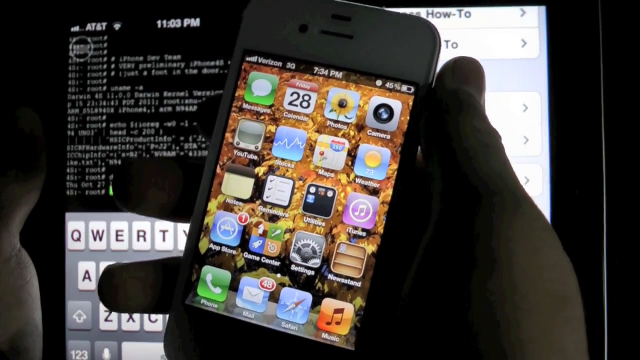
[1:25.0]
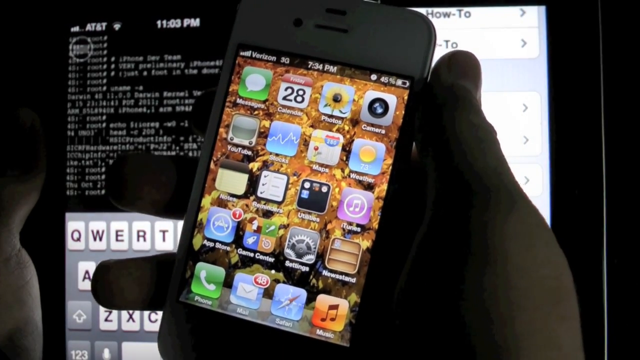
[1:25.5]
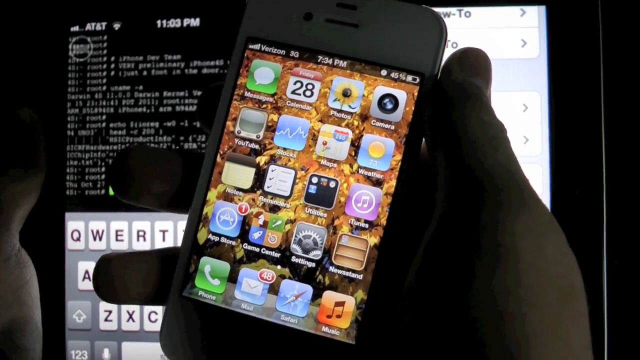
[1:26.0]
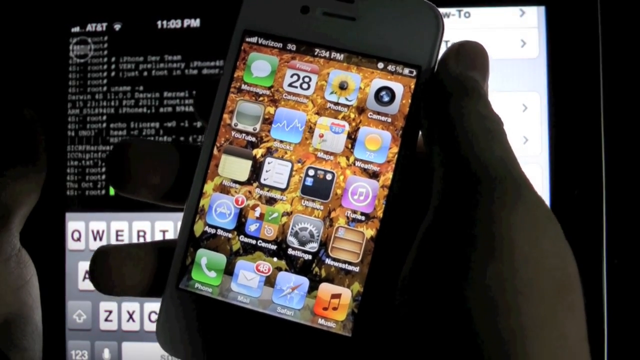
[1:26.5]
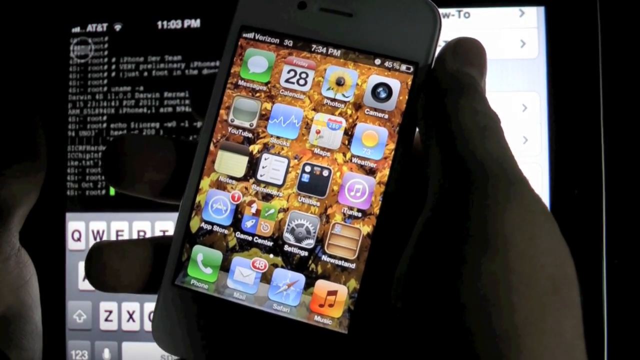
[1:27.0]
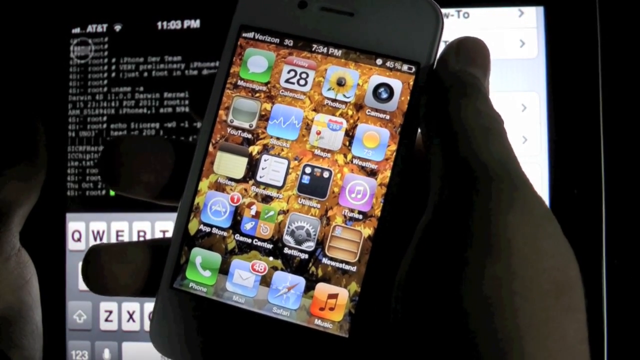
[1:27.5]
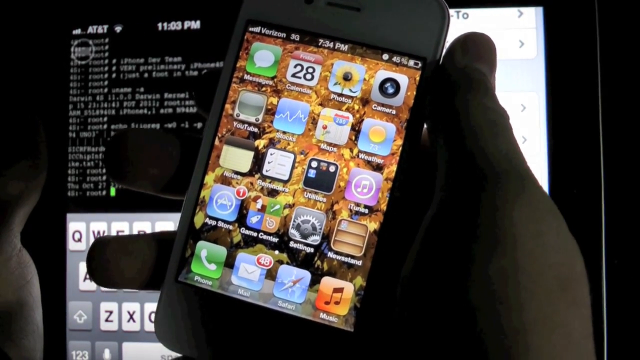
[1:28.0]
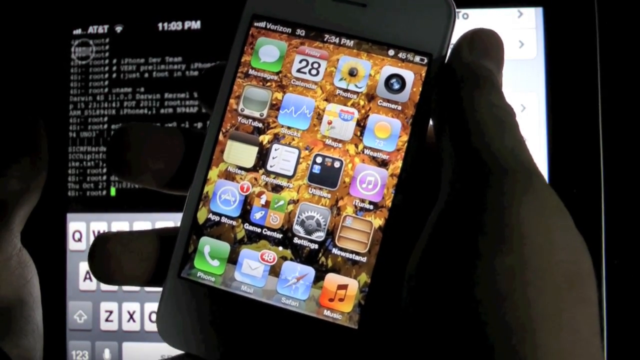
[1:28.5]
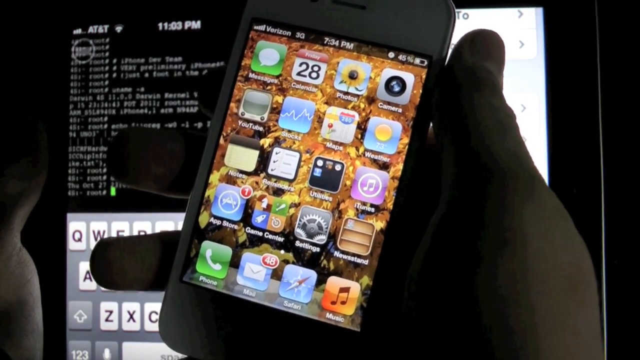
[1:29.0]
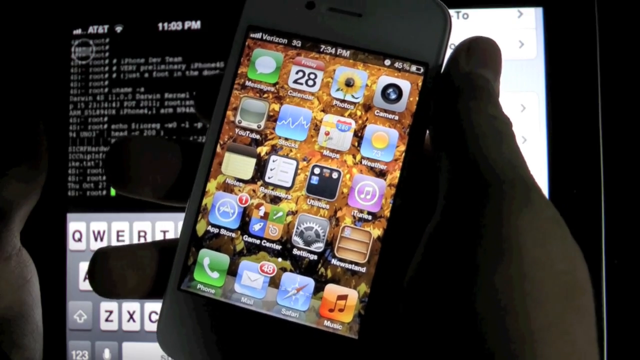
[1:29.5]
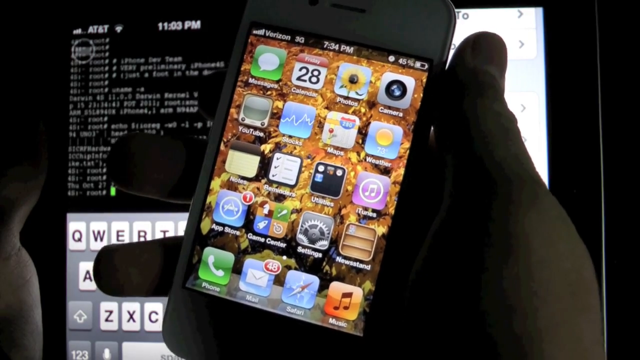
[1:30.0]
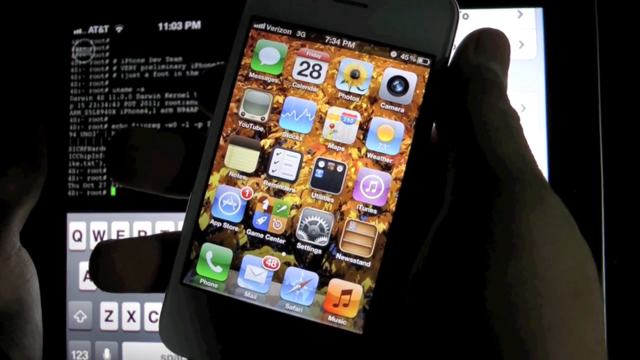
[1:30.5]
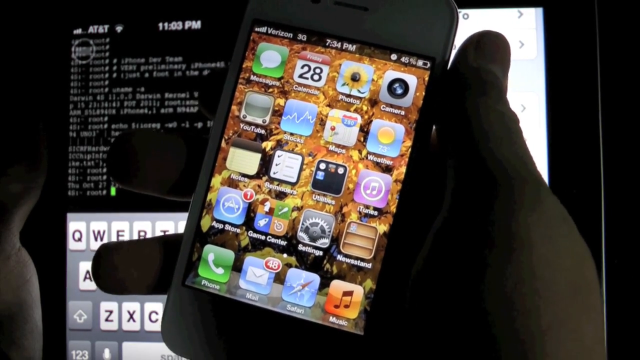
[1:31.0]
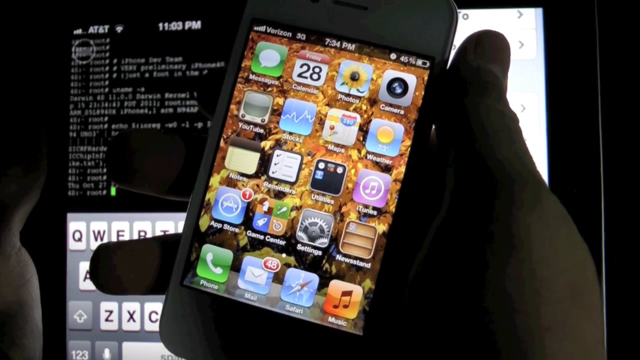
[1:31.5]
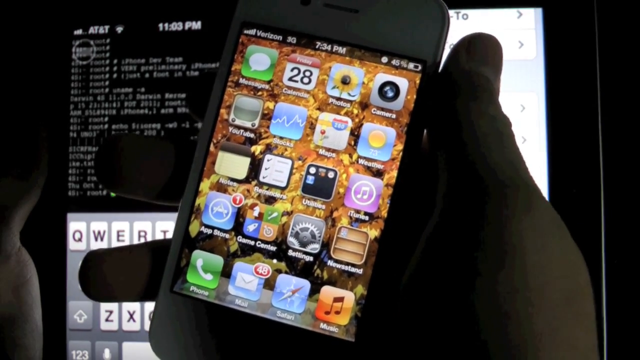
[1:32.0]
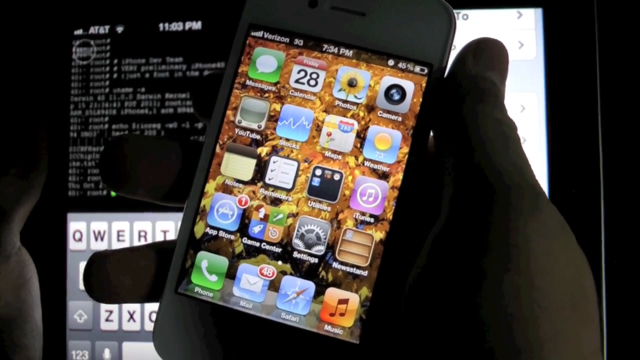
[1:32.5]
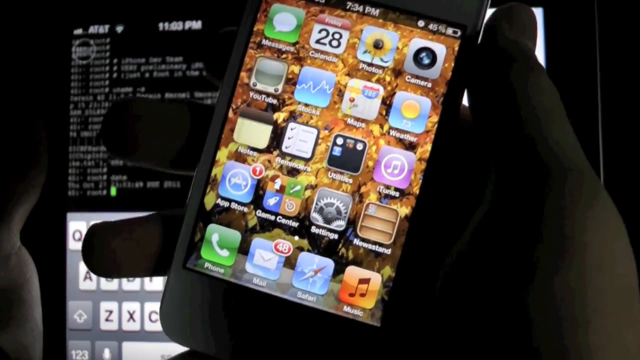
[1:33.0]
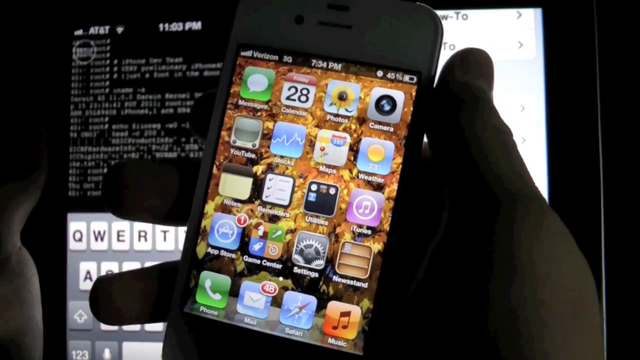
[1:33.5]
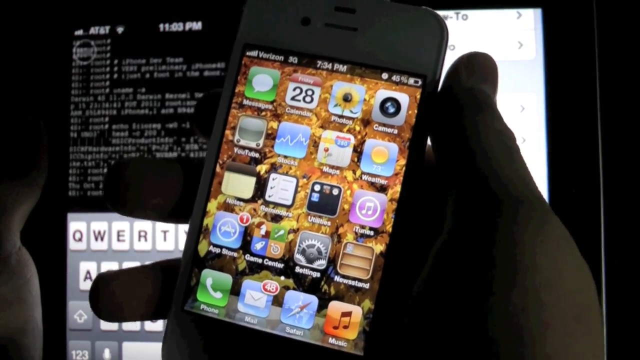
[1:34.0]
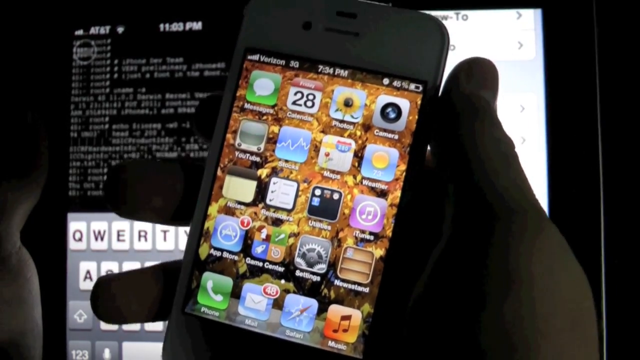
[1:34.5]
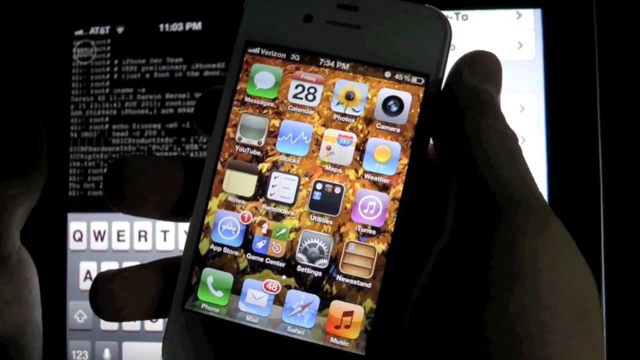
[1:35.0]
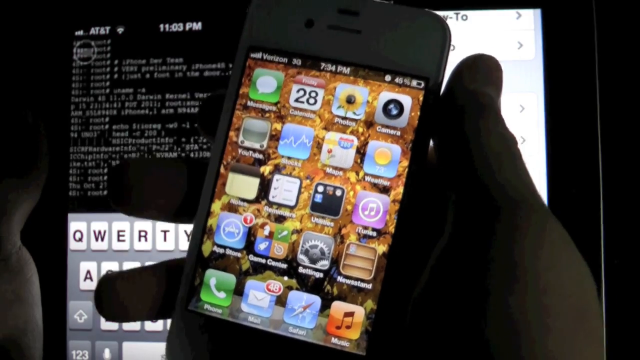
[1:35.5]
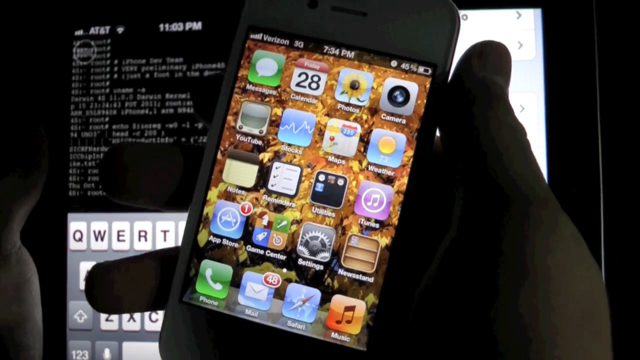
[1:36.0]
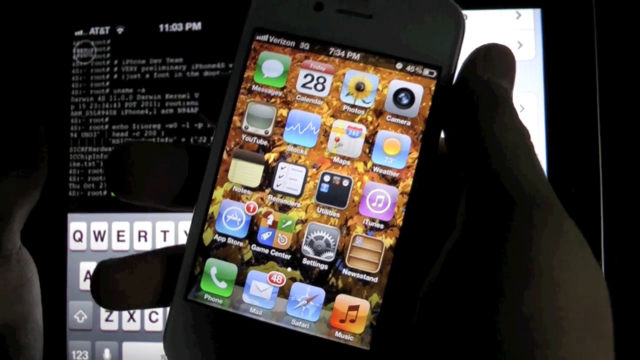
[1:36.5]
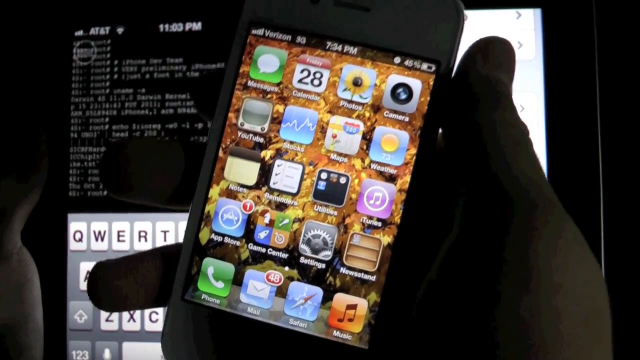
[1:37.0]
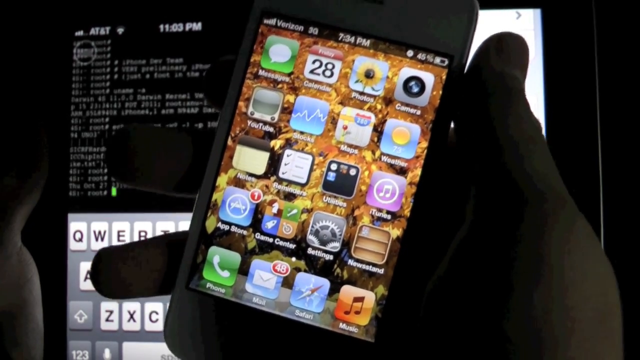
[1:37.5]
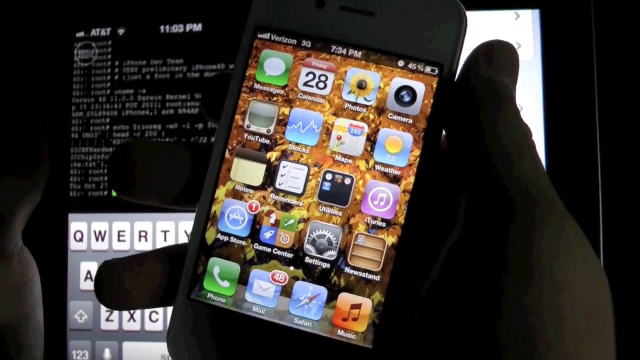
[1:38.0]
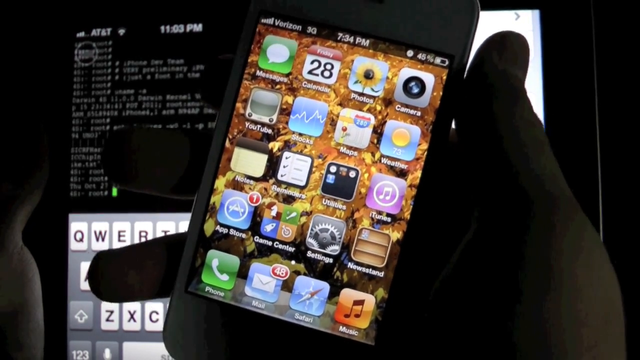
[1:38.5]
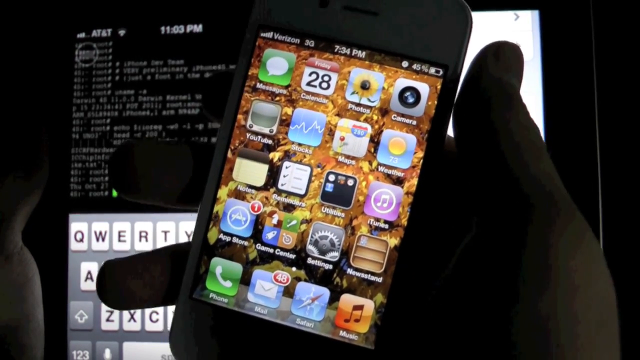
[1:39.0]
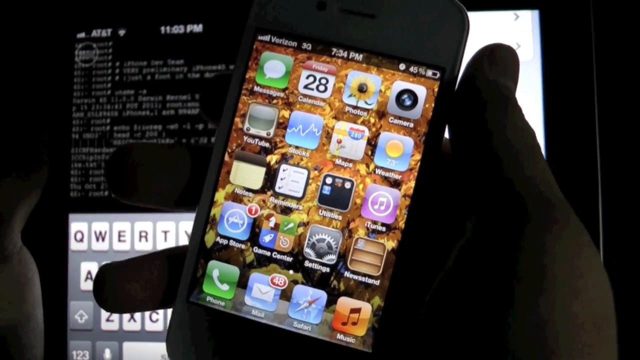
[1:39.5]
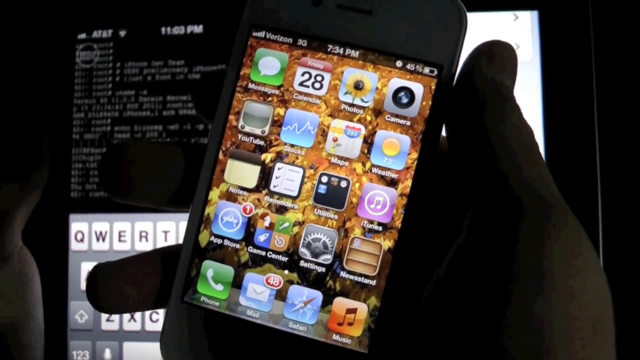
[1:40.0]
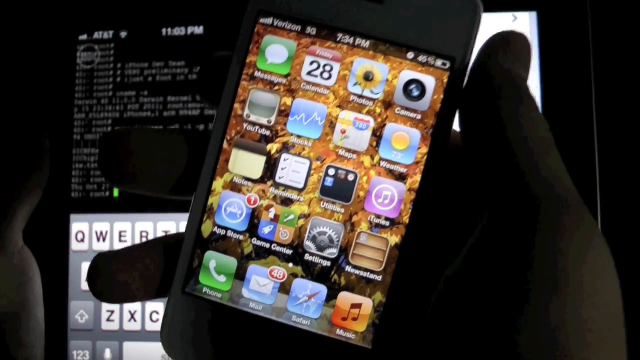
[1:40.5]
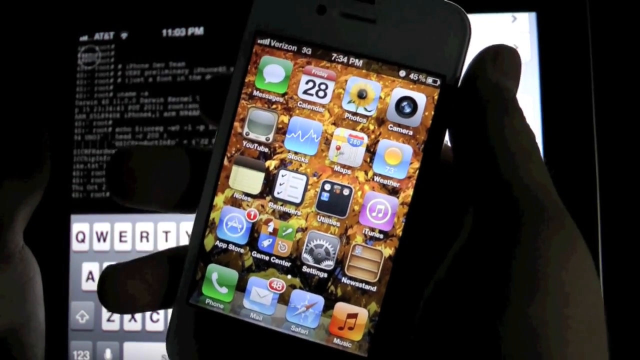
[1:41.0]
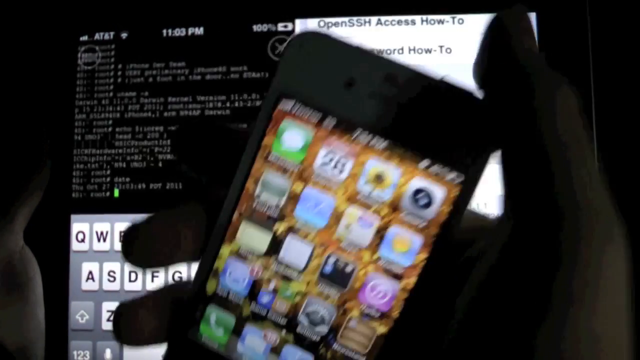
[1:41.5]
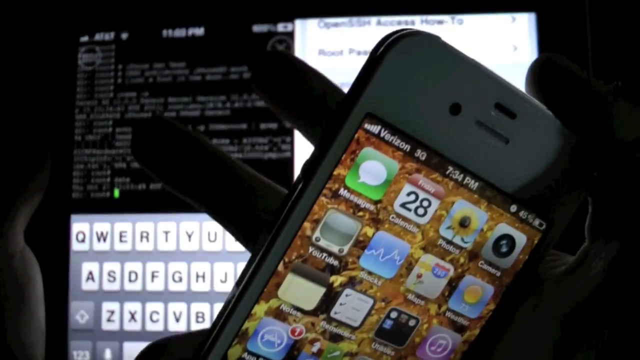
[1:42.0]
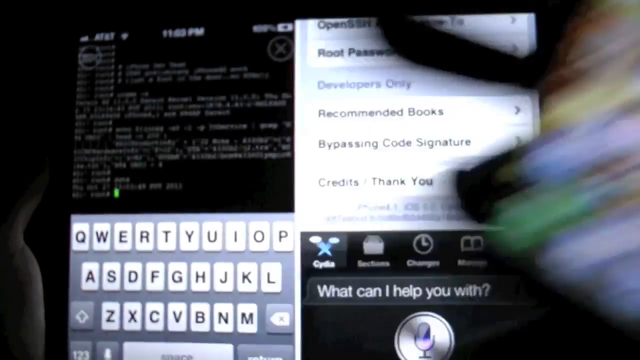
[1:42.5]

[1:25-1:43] He keeps talking while holding the phone. At the end he holds up his middle and index fingers with the hand holding the phone, apparently a peace sign to sign off. There is no end card. His left hand appears to be visible on the left, holding another phone, which may be the source of the screen on the left.